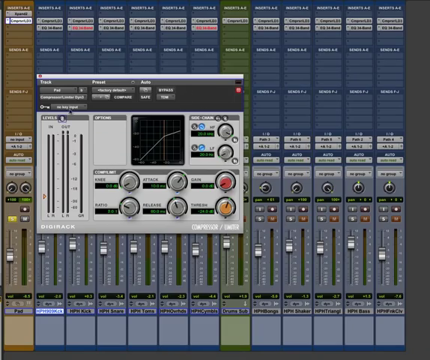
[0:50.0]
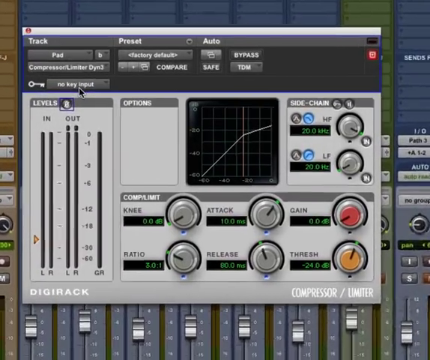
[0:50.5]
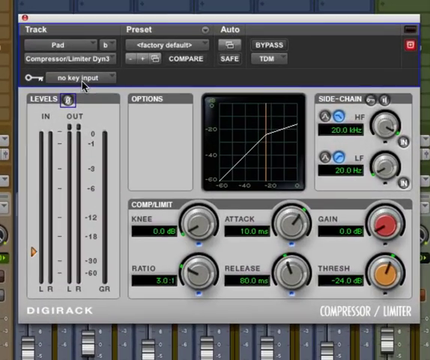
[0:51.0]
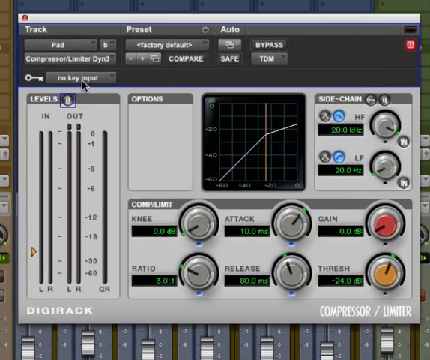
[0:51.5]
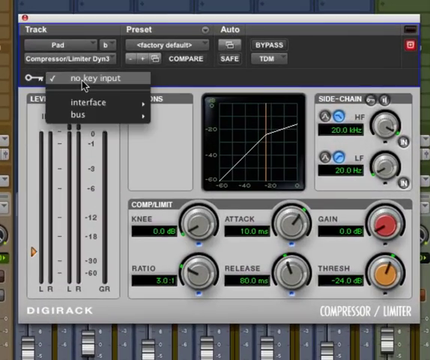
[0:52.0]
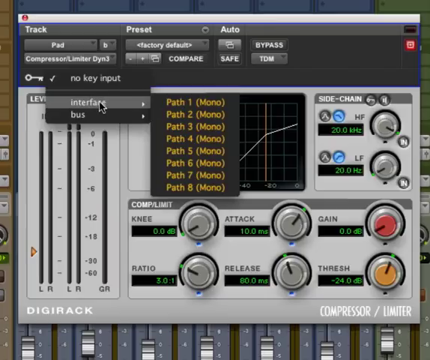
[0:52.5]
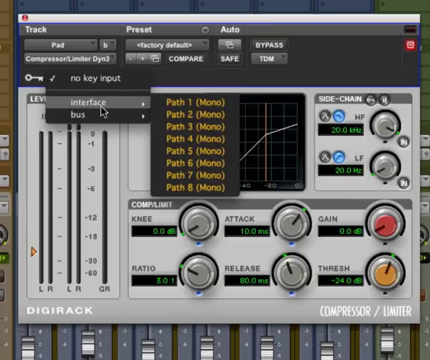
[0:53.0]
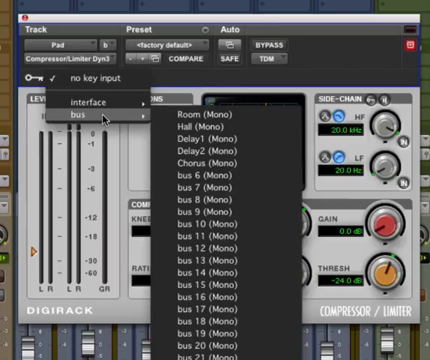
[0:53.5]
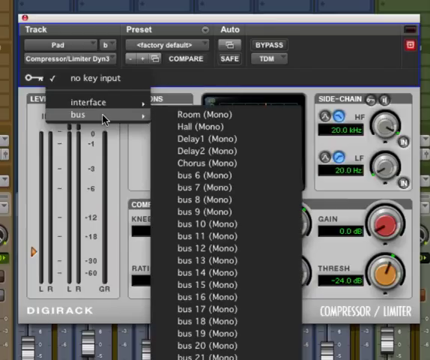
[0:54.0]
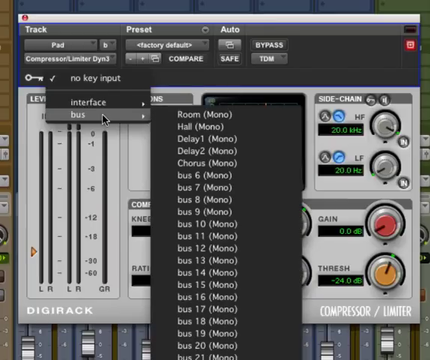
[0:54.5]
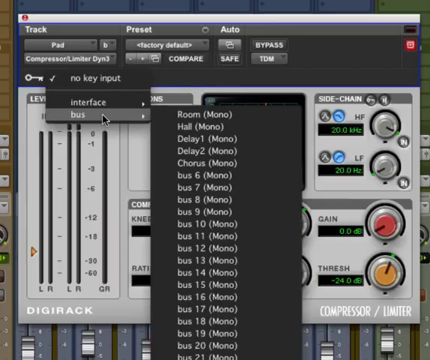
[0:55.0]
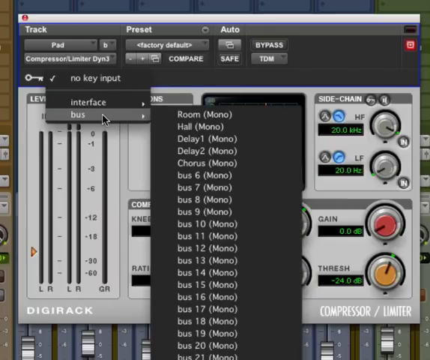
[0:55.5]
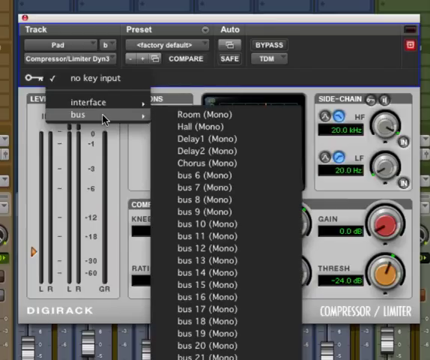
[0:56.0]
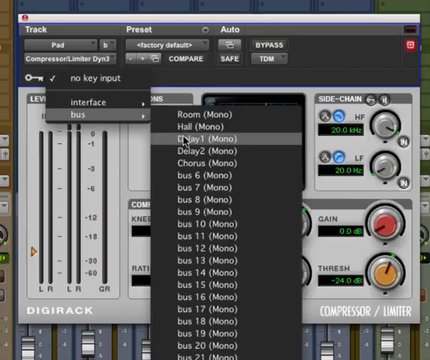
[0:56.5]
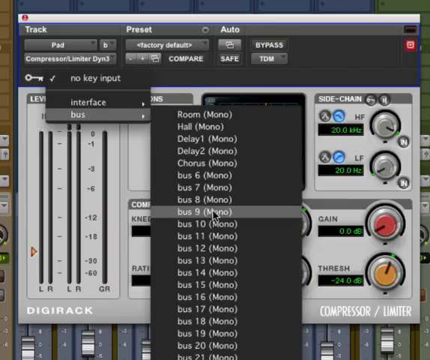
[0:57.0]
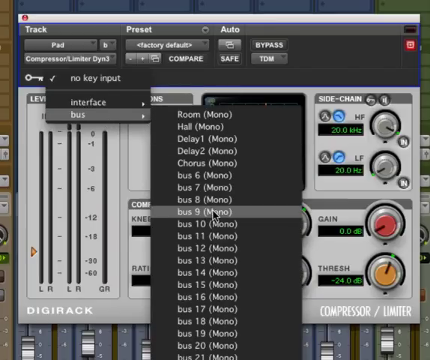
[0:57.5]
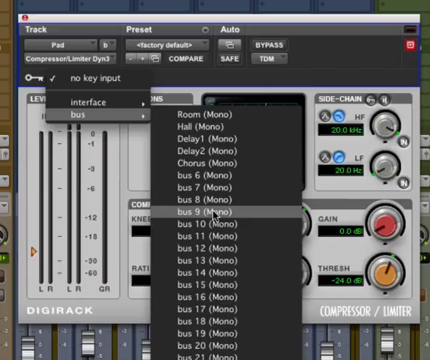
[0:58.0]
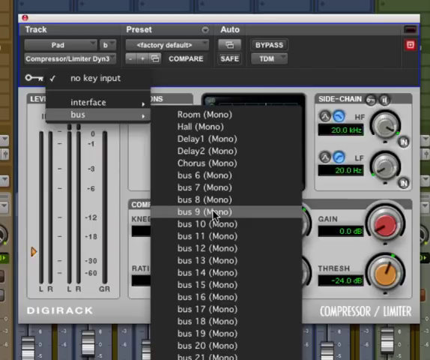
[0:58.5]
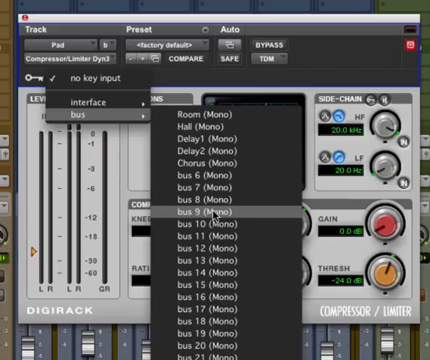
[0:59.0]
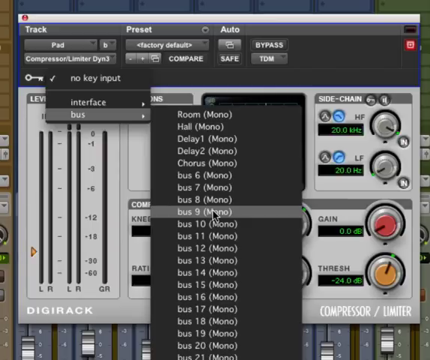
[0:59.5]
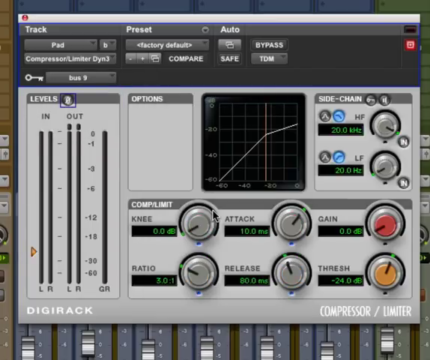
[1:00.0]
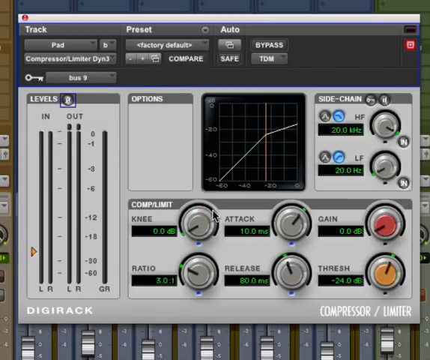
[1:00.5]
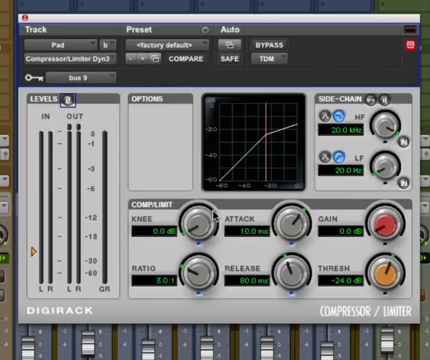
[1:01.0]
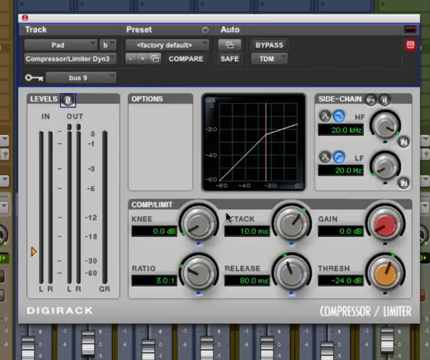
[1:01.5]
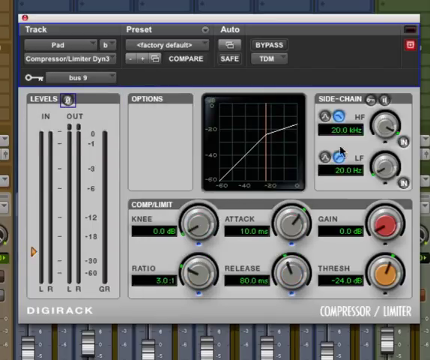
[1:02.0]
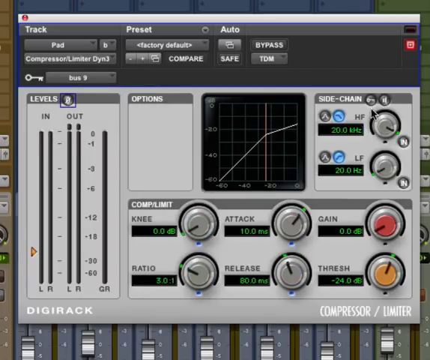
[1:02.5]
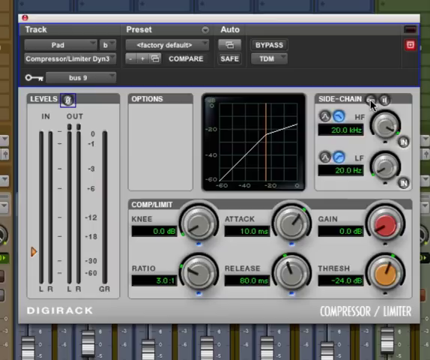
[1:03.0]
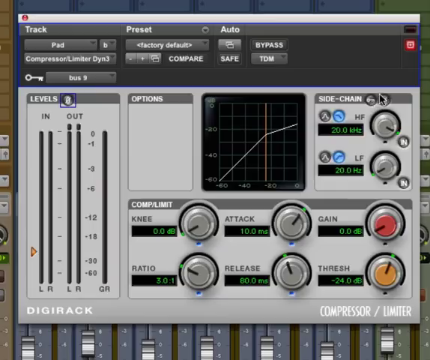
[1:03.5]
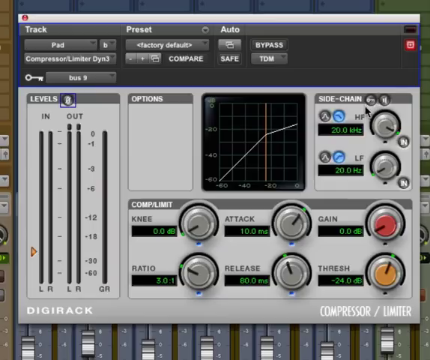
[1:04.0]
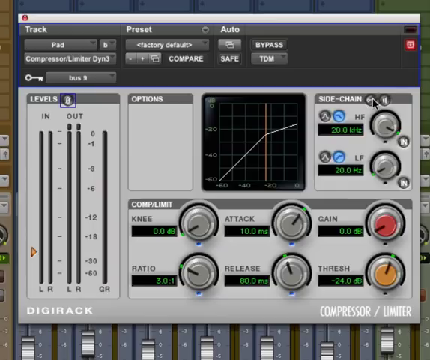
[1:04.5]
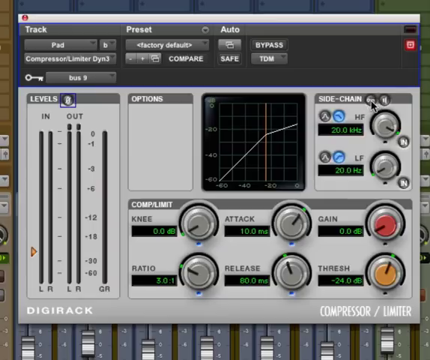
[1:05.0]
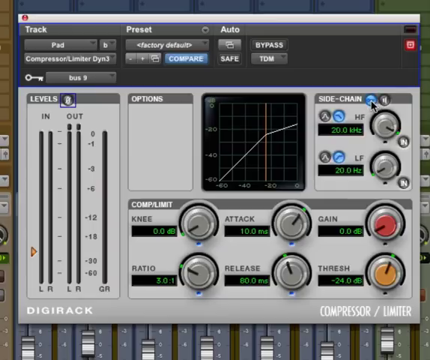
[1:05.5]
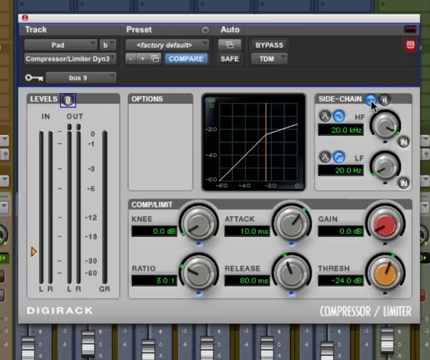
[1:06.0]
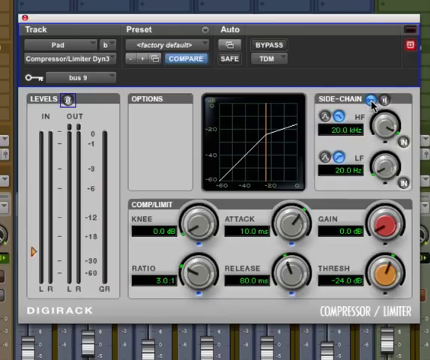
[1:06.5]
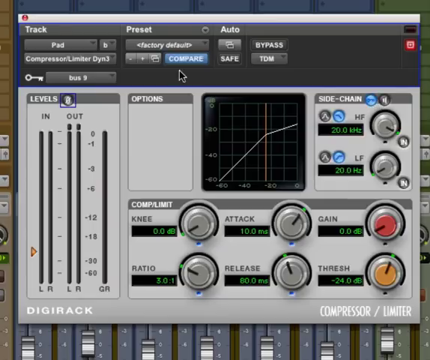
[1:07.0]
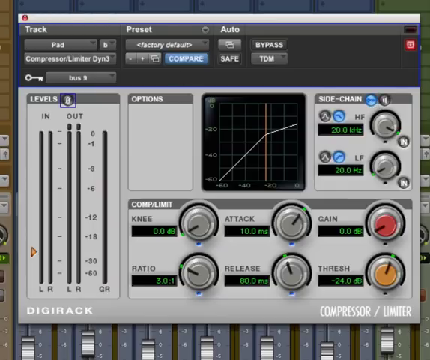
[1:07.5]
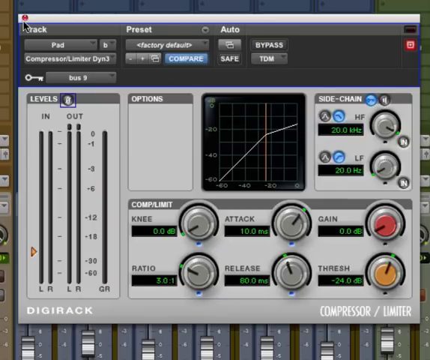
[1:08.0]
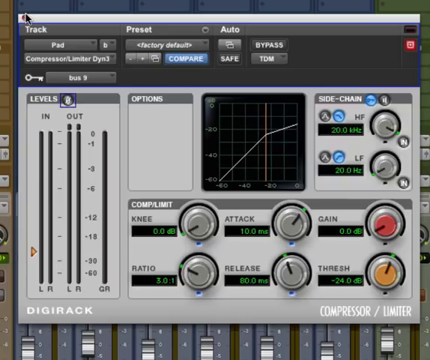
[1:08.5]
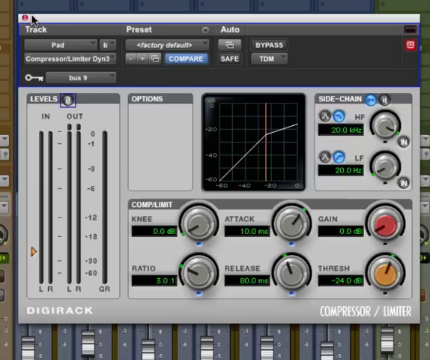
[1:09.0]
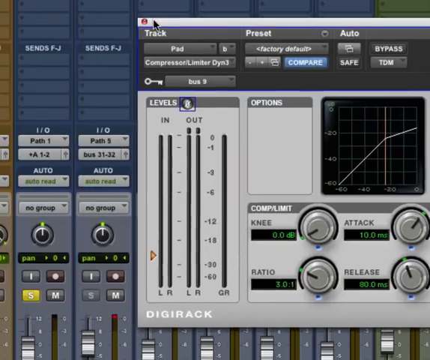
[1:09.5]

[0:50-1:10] The title "side chain compression in Pro Tools" is on screen. There are about 15 slots and about 30 little lines where a little fluorescent green line fluctuates up and down, apparently depending on the audio levels. He runs his mouse over certain letters, which are in blue. He presses something, and "volume" appears in black letters in a little yellow box. There are sliders on the side that go up and down, seemingly to change the volume. He then moves up and presses a gray button, and a list comes up including "analog channel 1 stereo," "analog channel 2," "audio," "BOM factory BF3A," "BOM factory BF76CSC1 comp," "C1 compressor," "de-esser," "de-esser stereo," "Fairchild," "FFD3 compressor," "Fairchild 660," "track pad," "room mono," "hall mono," and "delay mono."